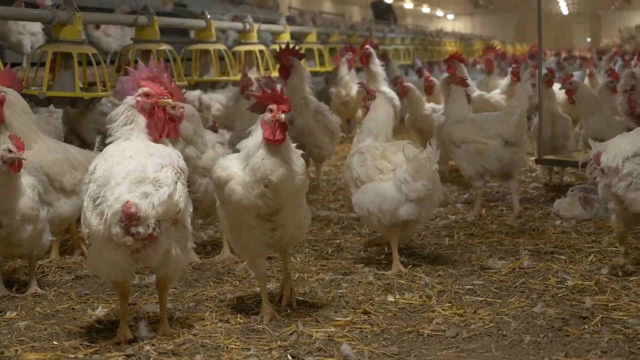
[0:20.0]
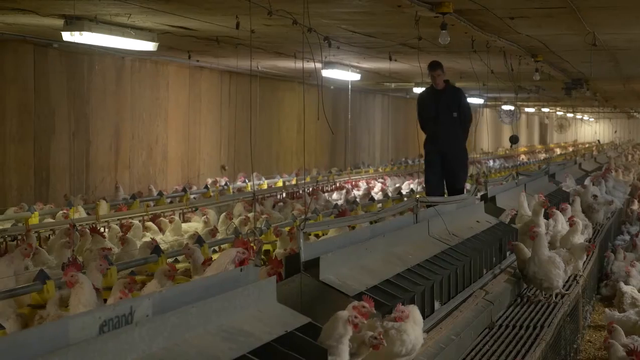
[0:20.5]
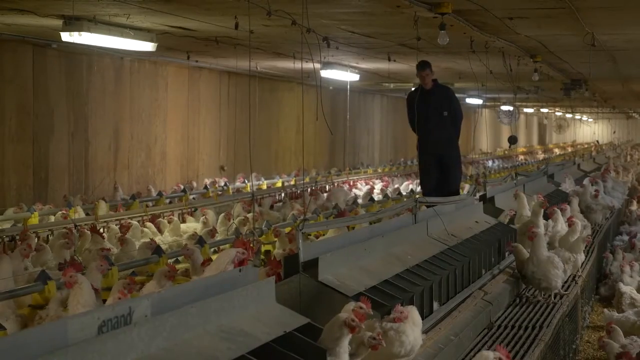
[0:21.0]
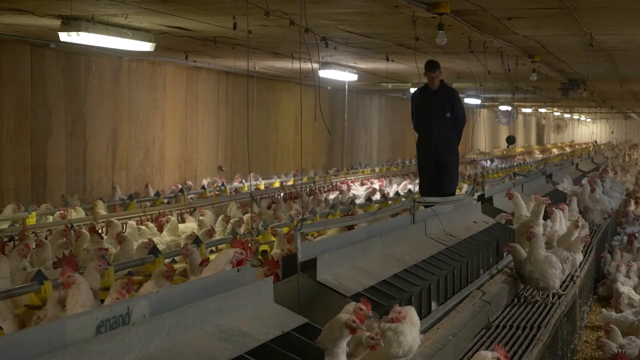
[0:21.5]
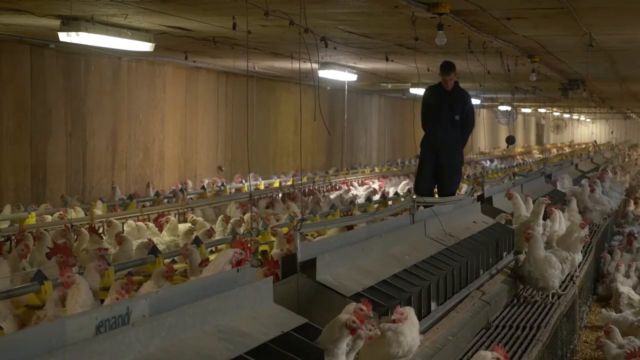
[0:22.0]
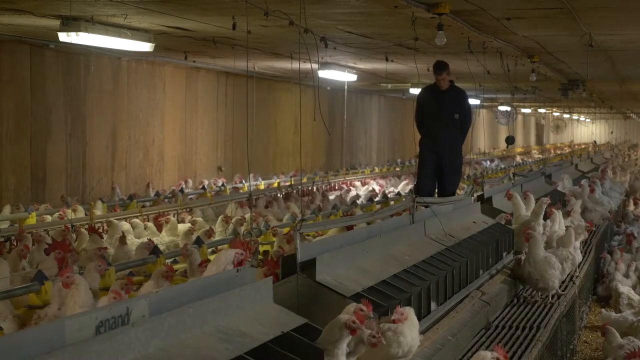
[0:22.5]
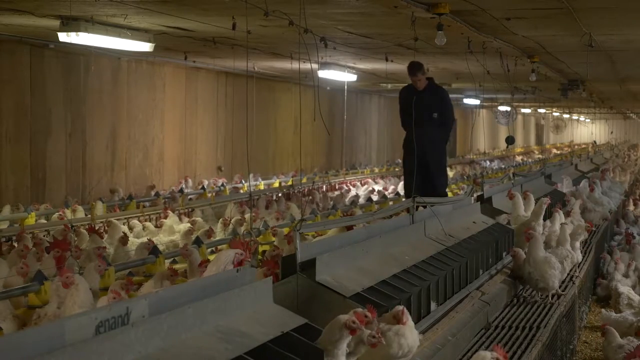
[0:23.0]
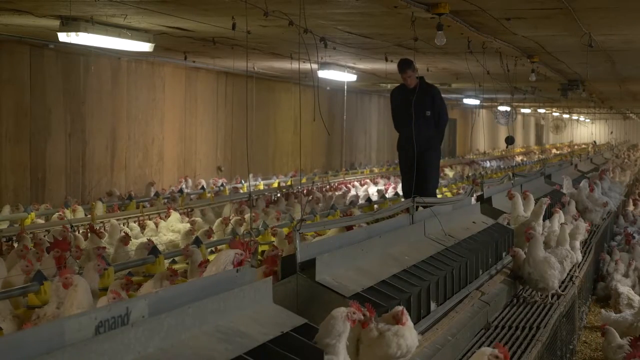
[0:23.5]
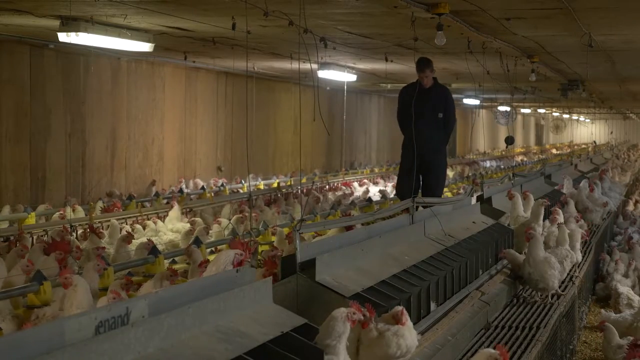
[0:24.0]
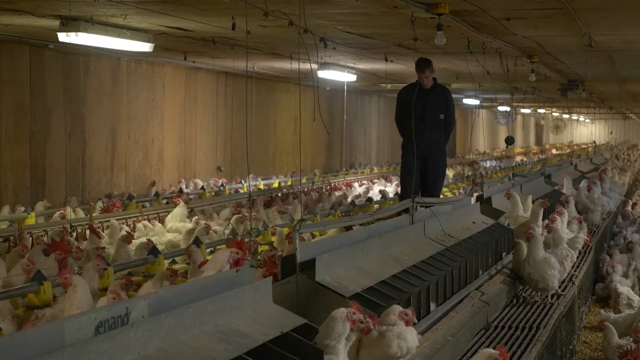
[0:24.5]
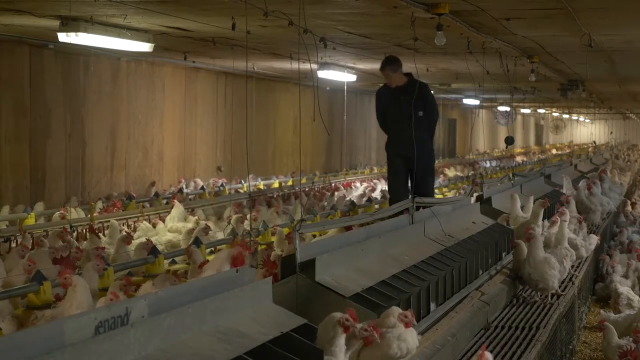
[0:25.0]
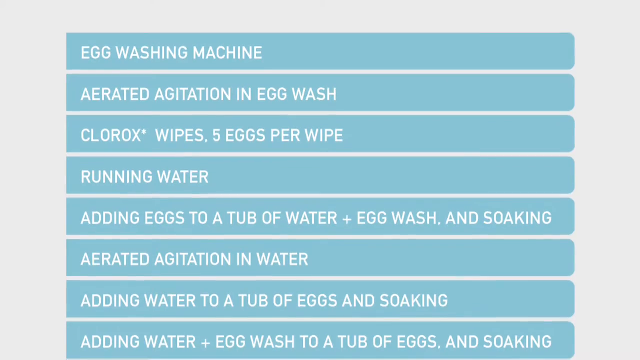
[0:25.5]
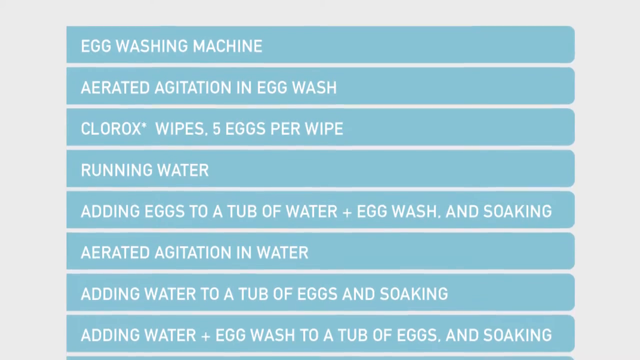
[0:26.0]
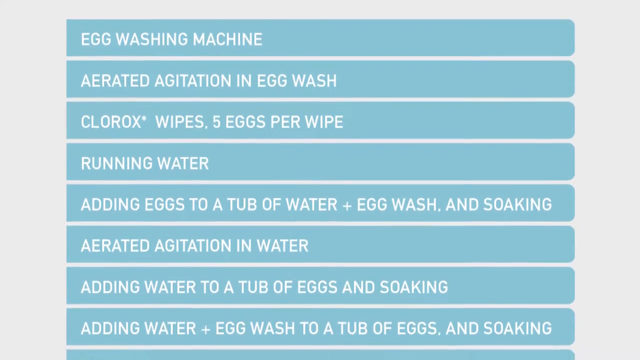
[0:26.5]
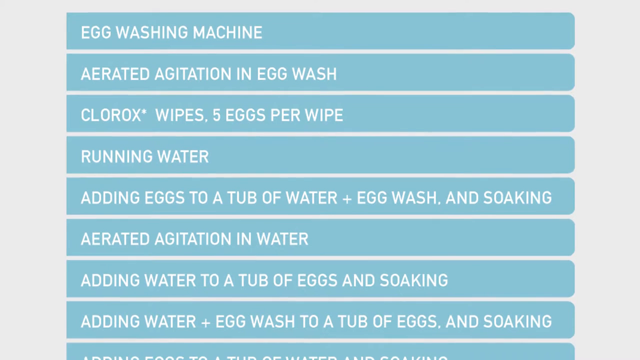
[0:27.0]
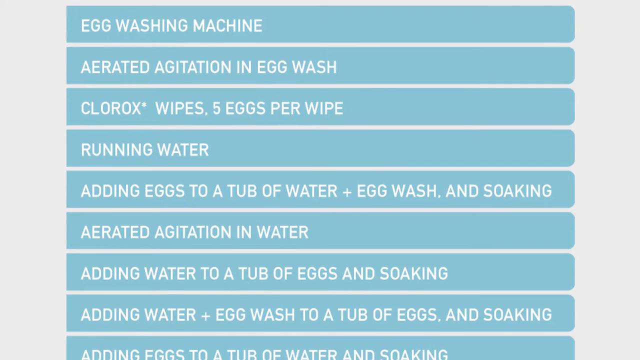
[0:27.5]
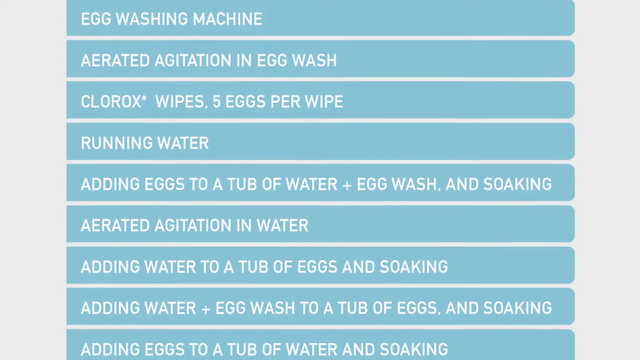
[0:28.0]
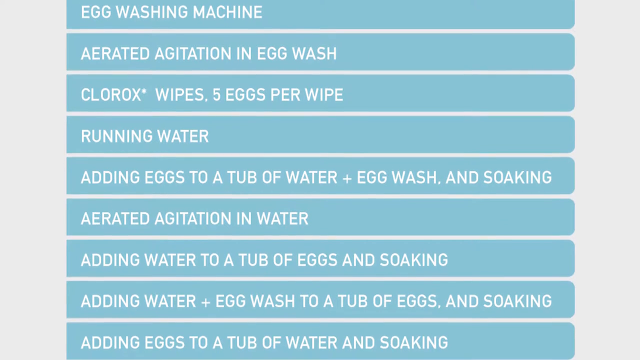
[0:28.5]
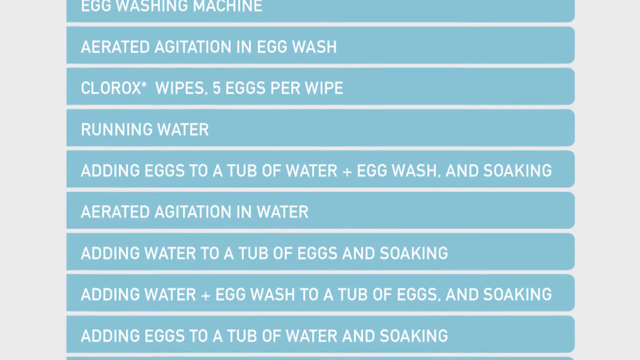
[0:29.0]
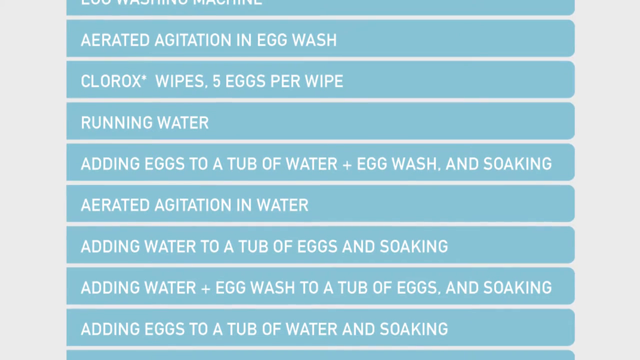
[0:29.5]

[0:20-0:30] White and reddish chickens fill the scene, and a person walks amongst them: a tall white man with short brown hair in a black uniform. The walls are dark brown, with some white lighting on the left side. Gray separating compartments divide the white chickens into groupings. Next, a light white background shows light blue square boxes with white lettering on the left side, running down: "egg washing machine, aerated agitation and egg wash, Clorox wipes, five eggs per wipe, running water, adding eggs to a tub of water plus egg wash and soaking, aerated agitation and water, adding water to a tub of eggs and soaking, adding water plus egg wash to a tub of eggs and soaking, adding eggs to a tub of water and soaking."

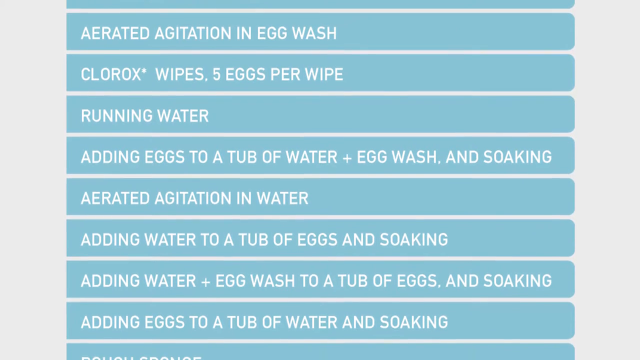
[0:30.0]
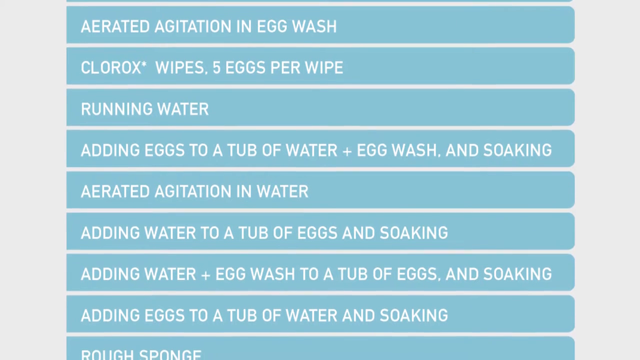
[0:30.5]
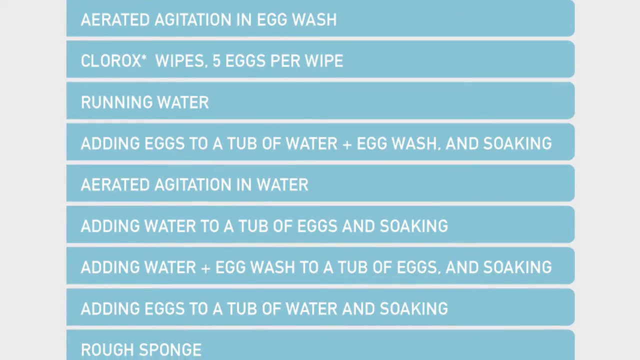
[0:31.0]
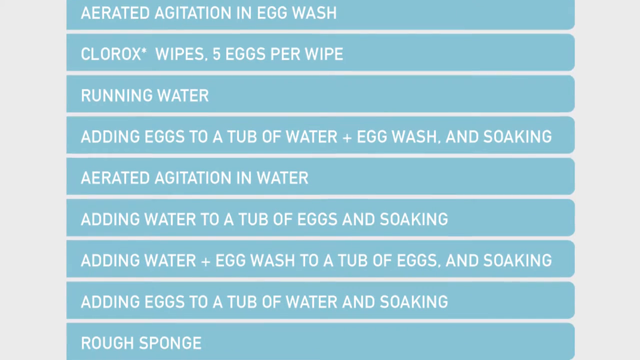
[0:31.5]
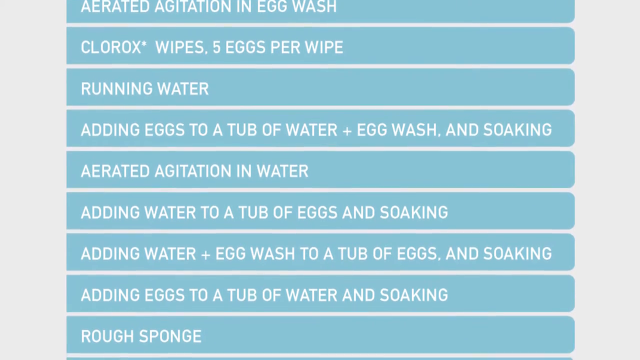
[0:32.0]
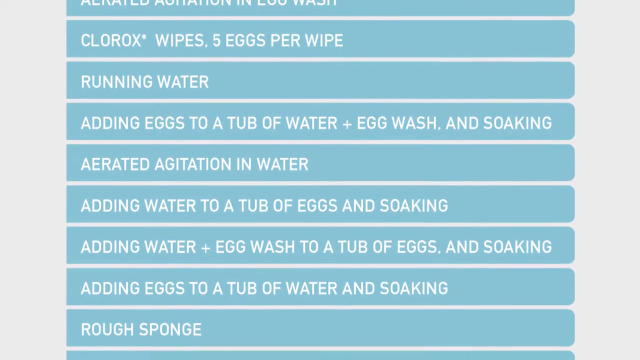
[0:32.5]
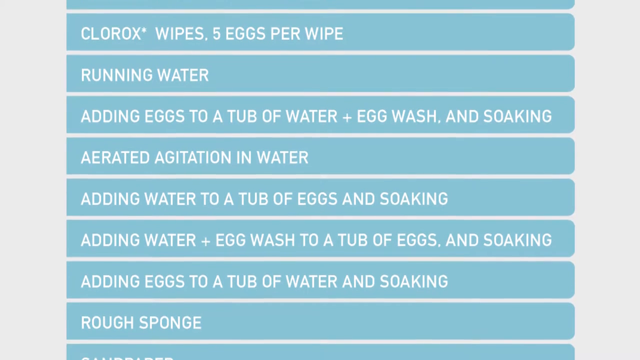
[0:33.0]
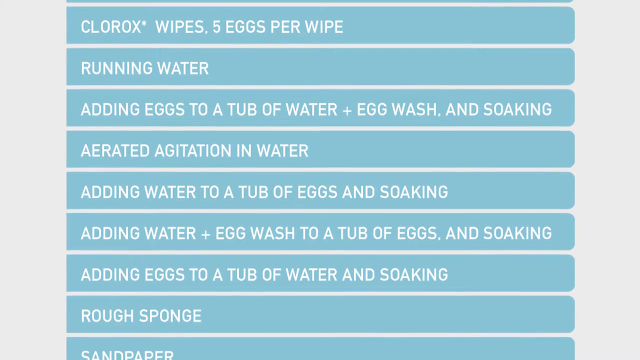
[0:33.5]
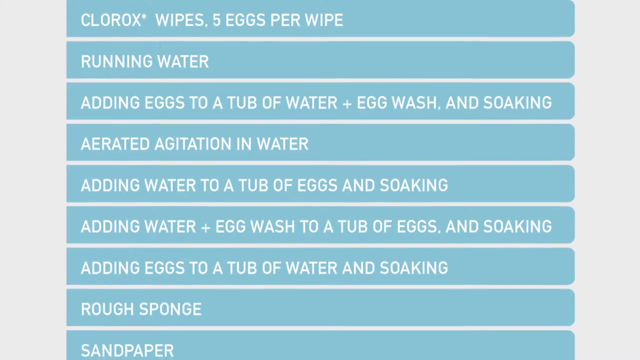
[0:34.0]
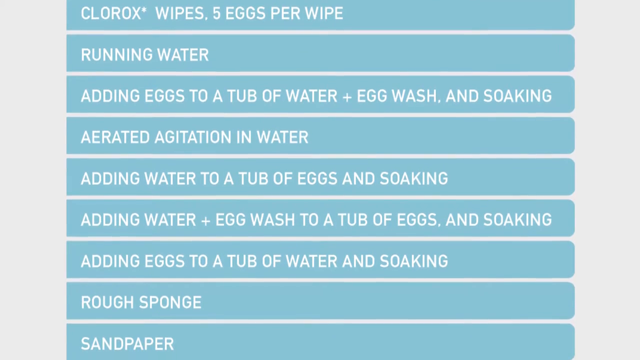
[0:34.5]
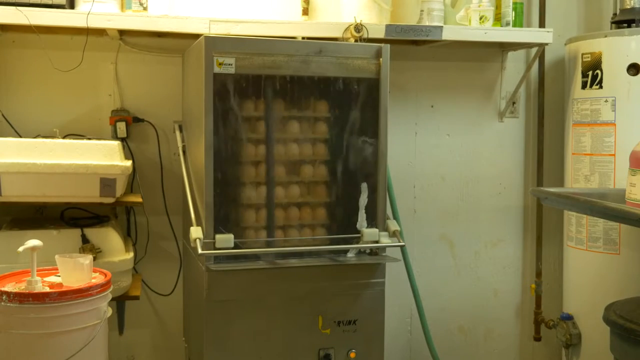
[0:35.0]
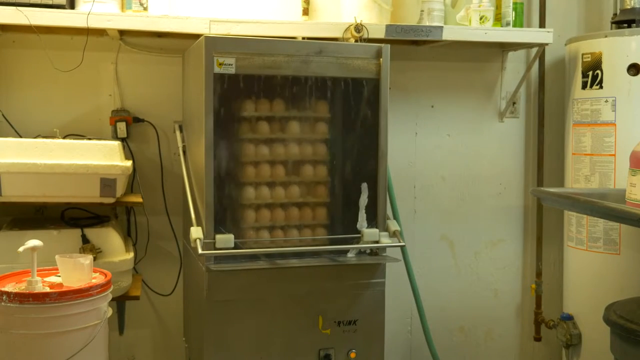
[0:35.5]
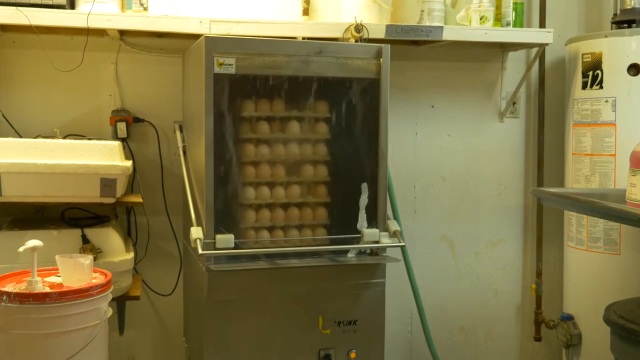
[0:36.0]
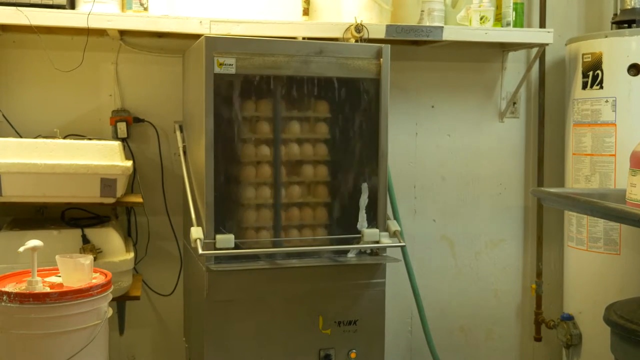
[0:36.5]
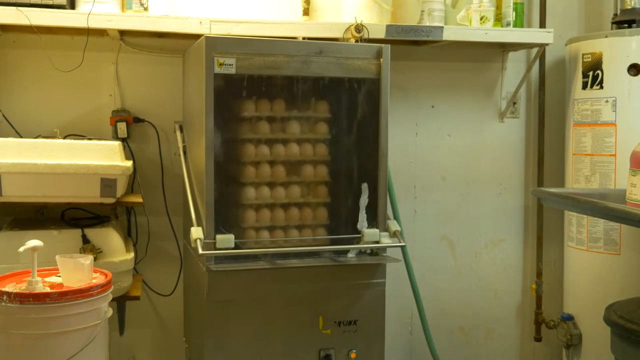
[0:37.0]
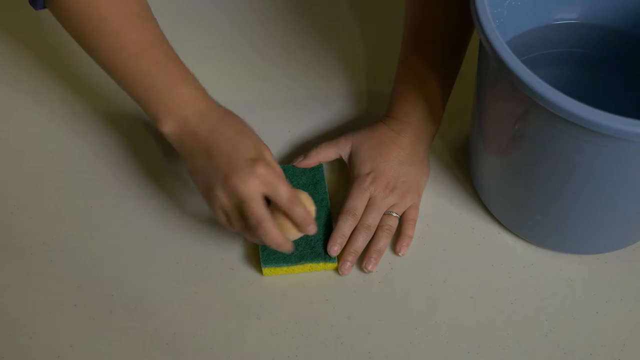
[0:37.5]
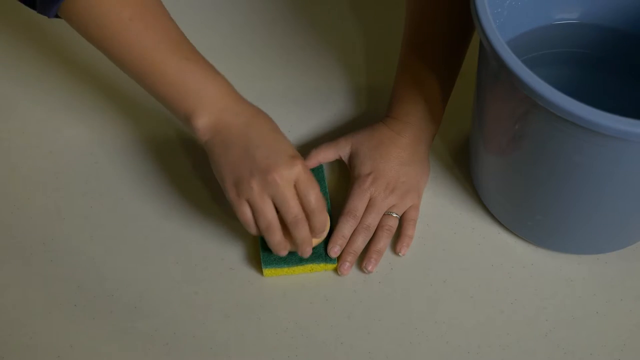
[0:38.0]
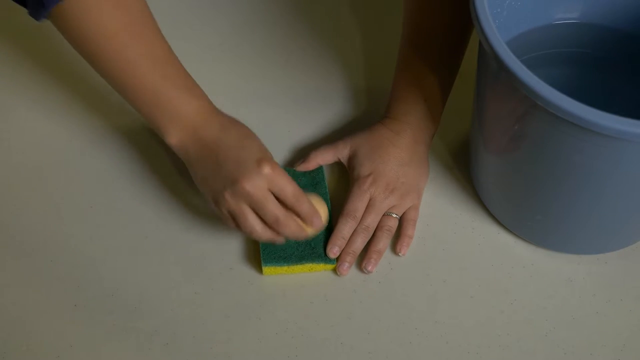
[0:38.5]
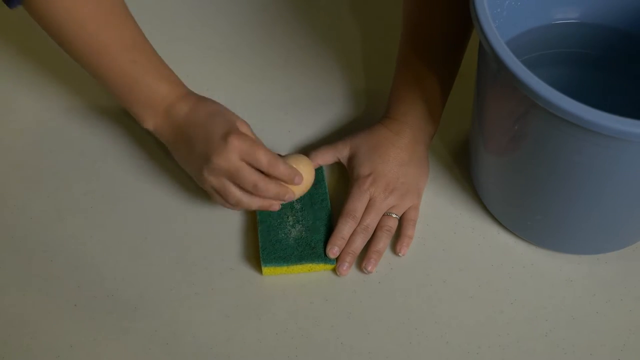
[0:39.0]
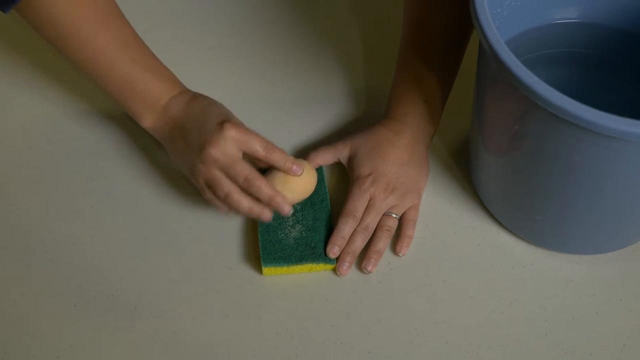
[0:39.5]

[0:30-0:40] On a light off-white background, gray boxes with white lettering on the left run downward: "aerated agitation in egg wash, Clorox wipes five eggs per wipe, running water, adding eggs to a tub of water, egg wash and soaking, aerated agitation in water, adding water to a tub of eggs and soaking, adding water plus egg wash to a tub of eggs and soaking, adding eggs to a tub of water and soaking, rough sponge, sandpaper." Next, a gray silver box with a glass covering holds brown trays of off-white eggs being washed. The back wall is off-white gray, with a gray shelving unit up top. On the left is a white bucket with a red cap and a white pump, and on the right is what looks like a water tank. A black squared section shows a white number 12. A white person's hand holds a dark green brush, with a light brown egg in their right hand. A blue bucket of water is on the left side, and the floor looks light gray. The person scrapes the egg and runs it under water.